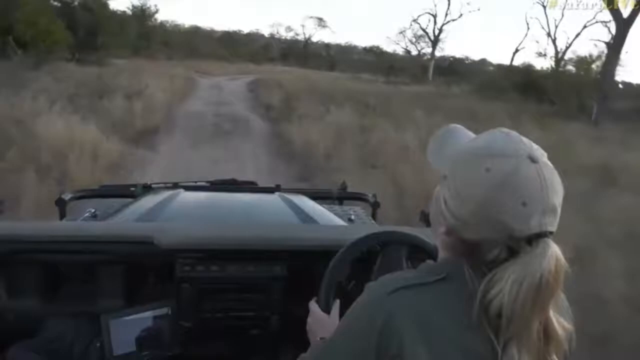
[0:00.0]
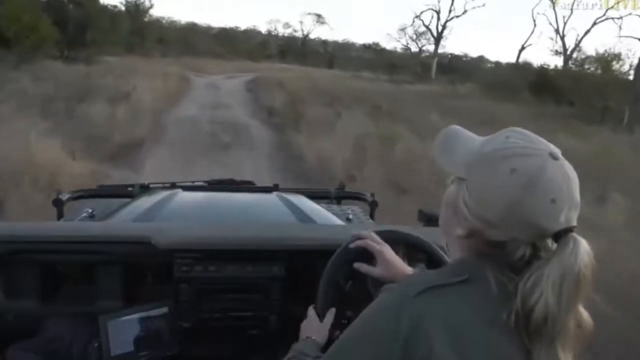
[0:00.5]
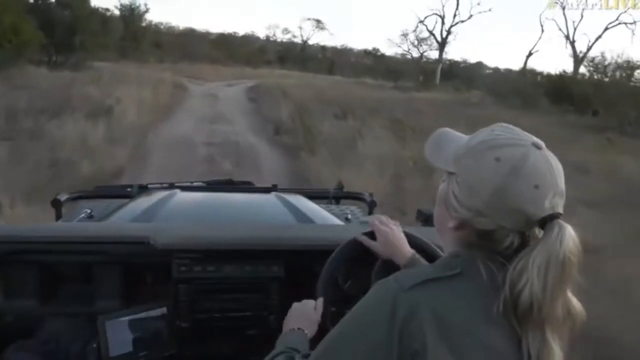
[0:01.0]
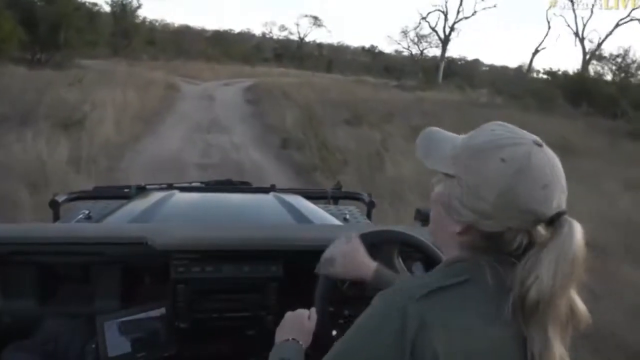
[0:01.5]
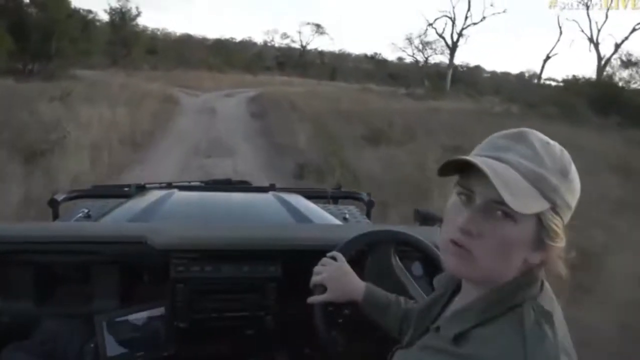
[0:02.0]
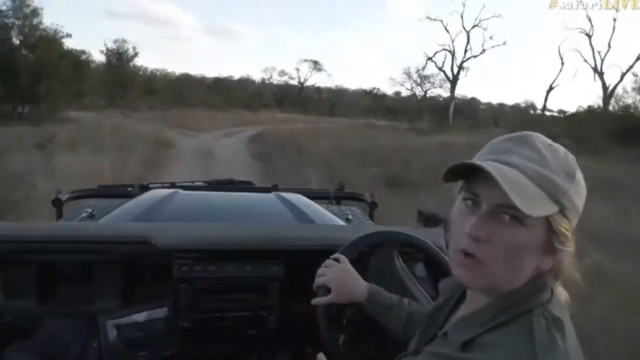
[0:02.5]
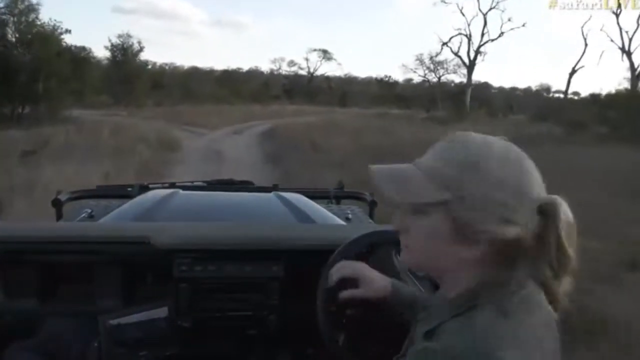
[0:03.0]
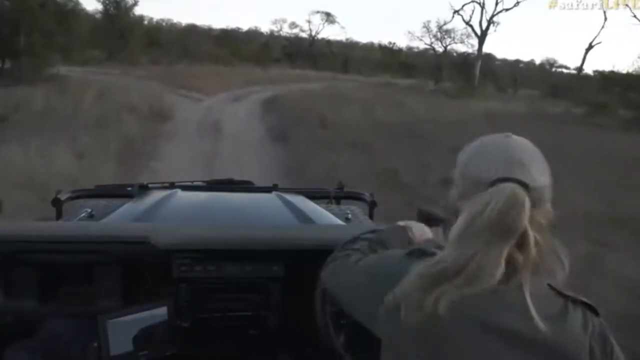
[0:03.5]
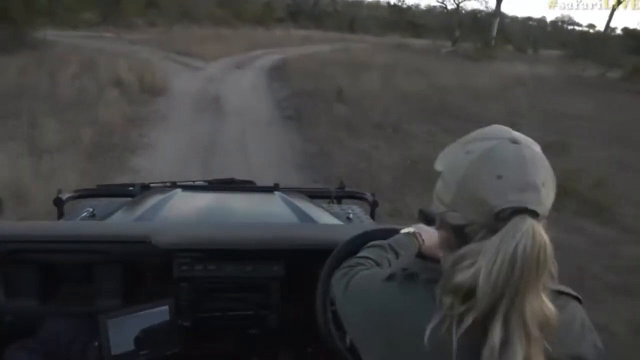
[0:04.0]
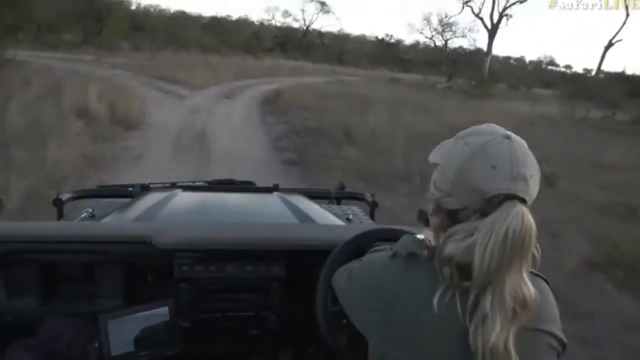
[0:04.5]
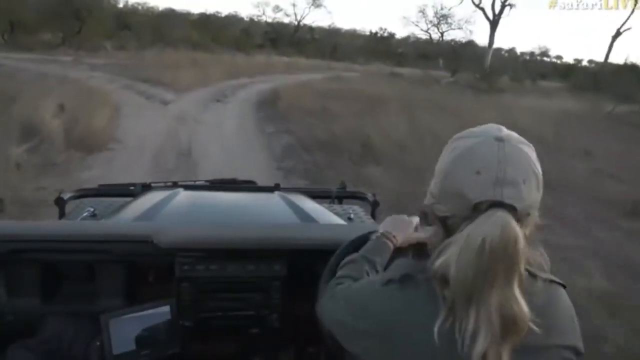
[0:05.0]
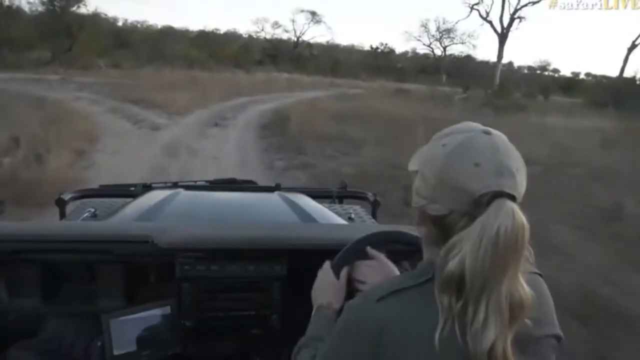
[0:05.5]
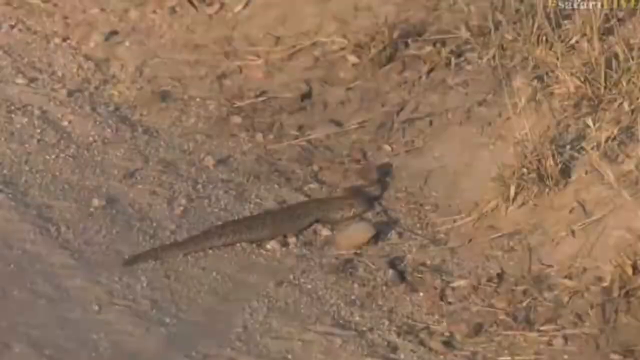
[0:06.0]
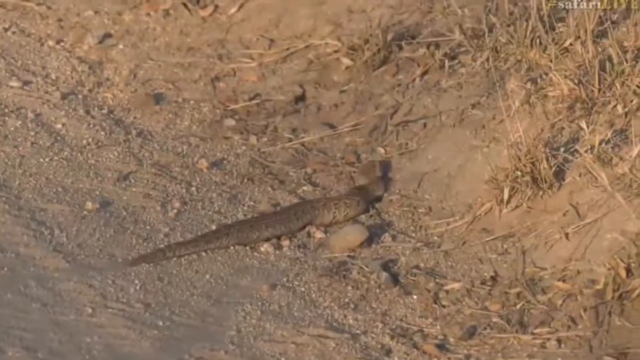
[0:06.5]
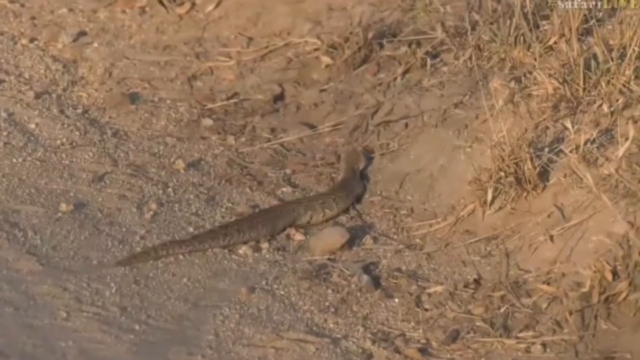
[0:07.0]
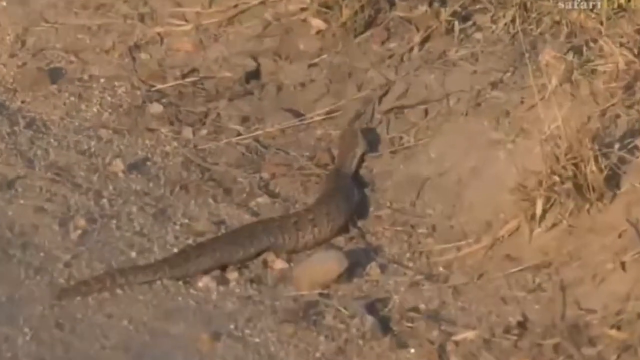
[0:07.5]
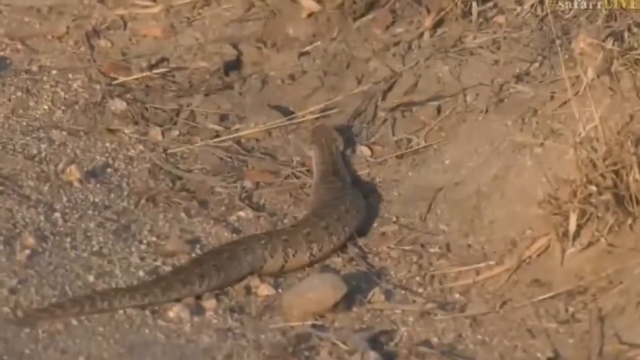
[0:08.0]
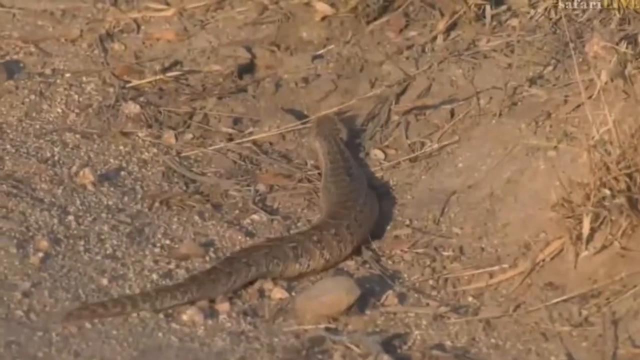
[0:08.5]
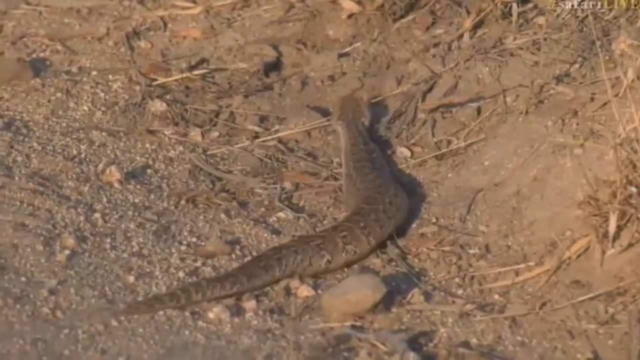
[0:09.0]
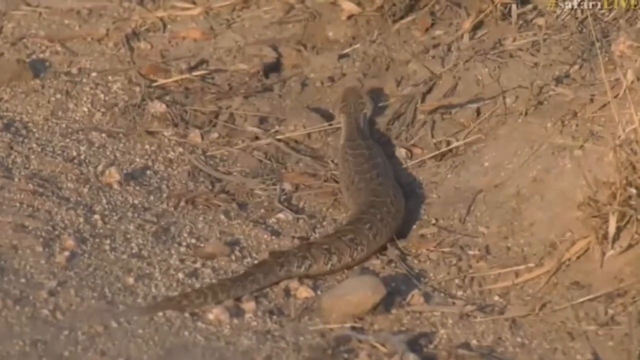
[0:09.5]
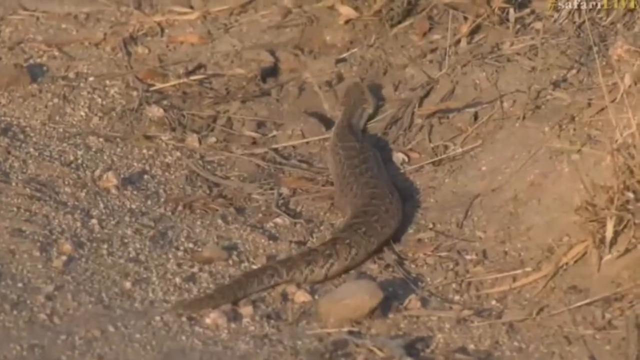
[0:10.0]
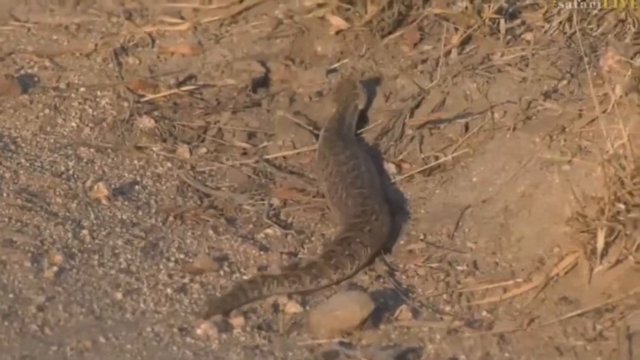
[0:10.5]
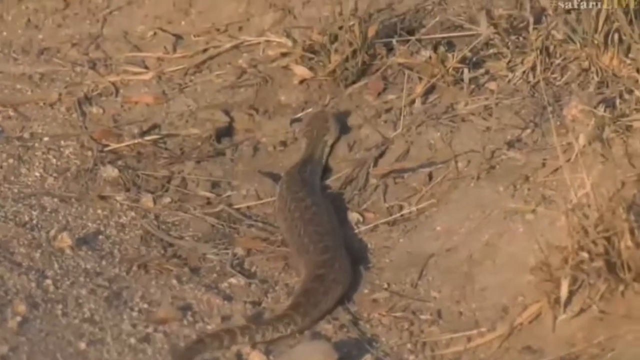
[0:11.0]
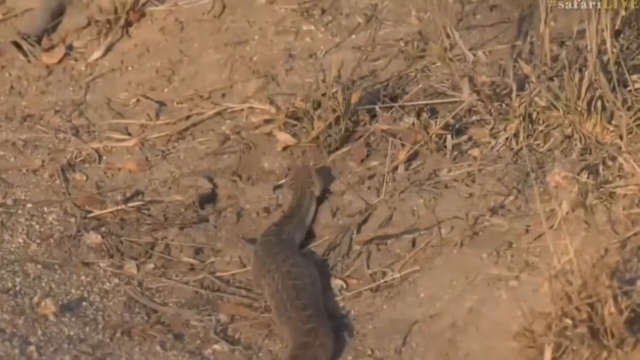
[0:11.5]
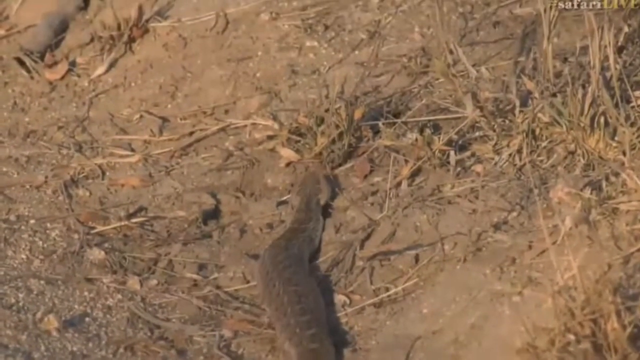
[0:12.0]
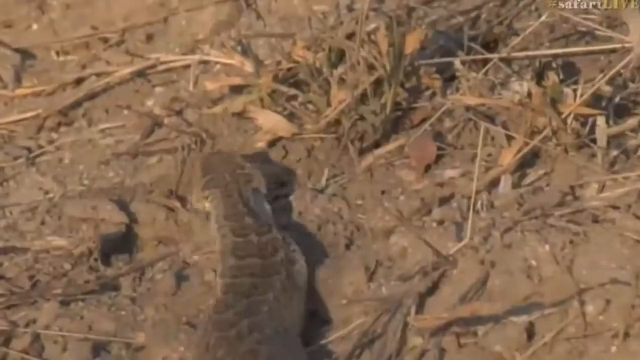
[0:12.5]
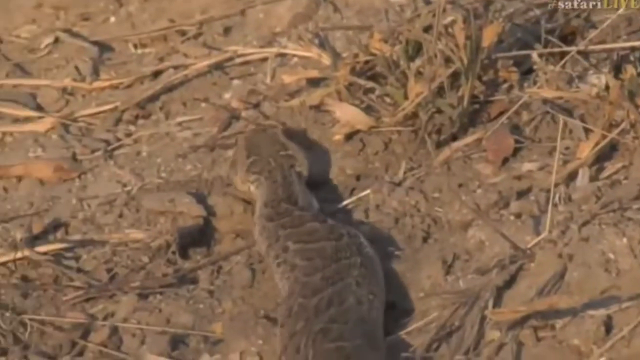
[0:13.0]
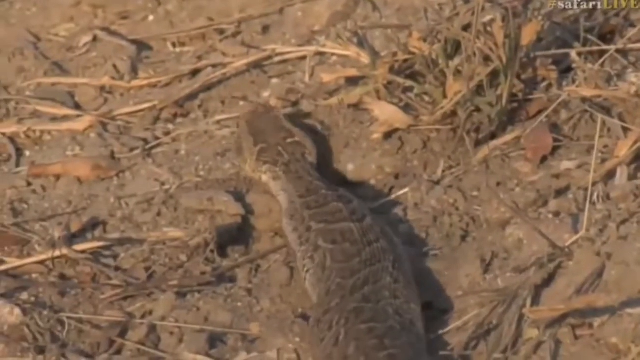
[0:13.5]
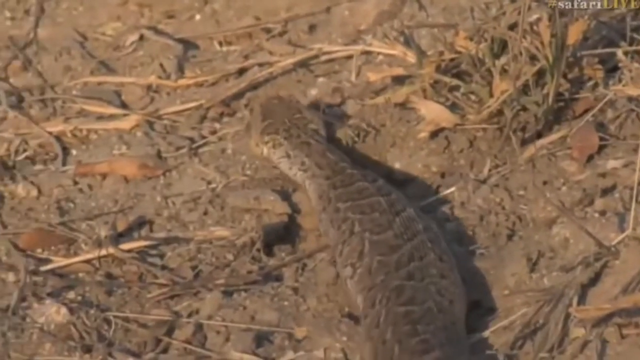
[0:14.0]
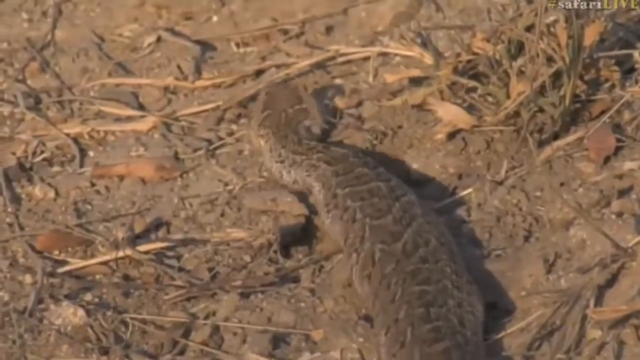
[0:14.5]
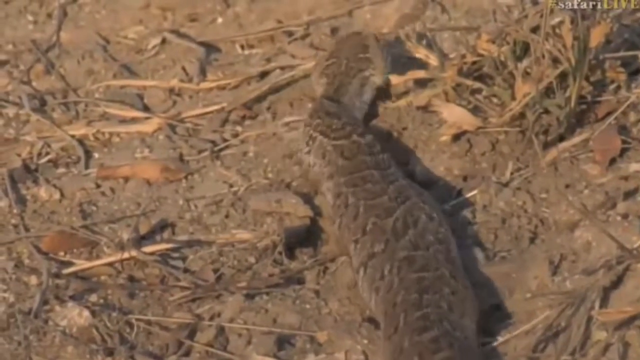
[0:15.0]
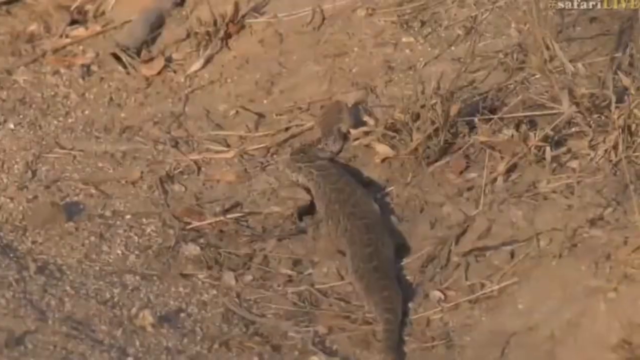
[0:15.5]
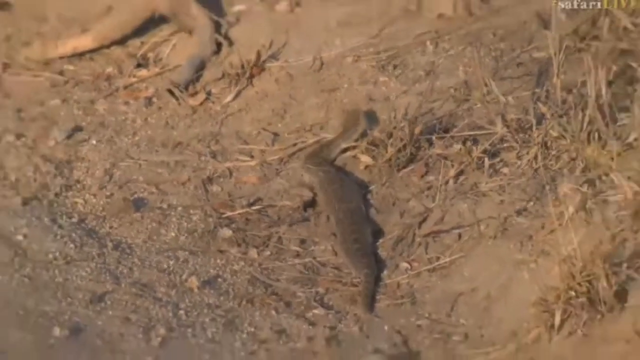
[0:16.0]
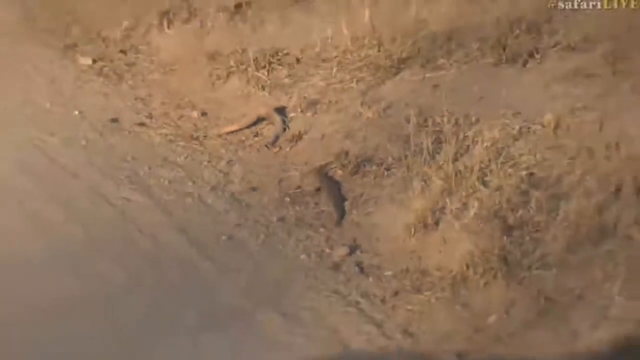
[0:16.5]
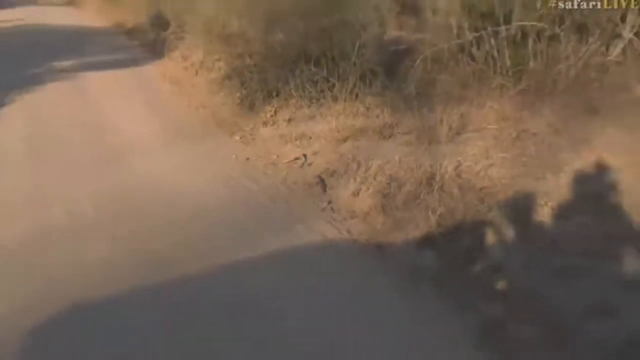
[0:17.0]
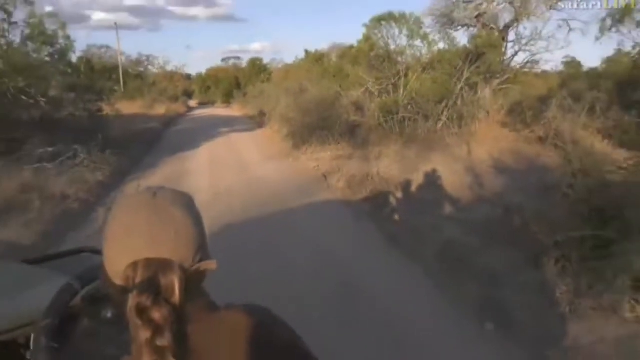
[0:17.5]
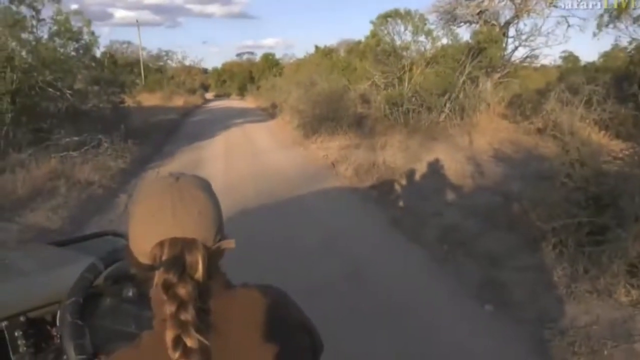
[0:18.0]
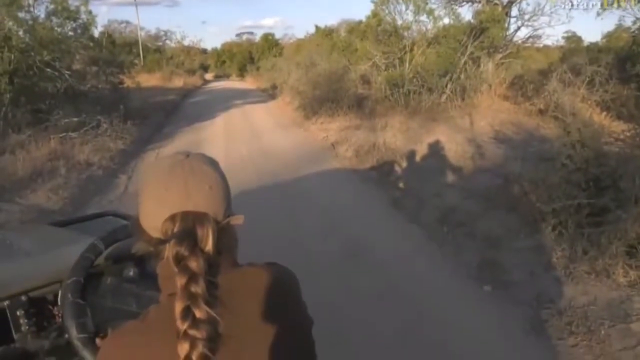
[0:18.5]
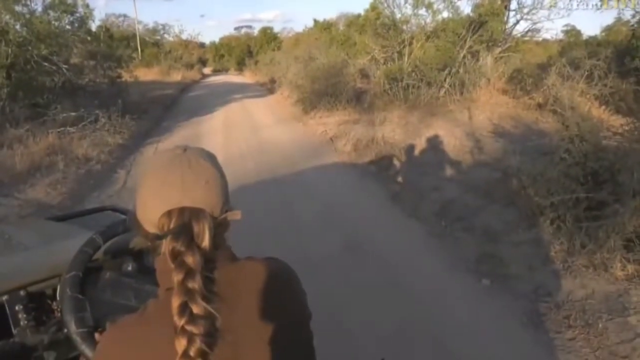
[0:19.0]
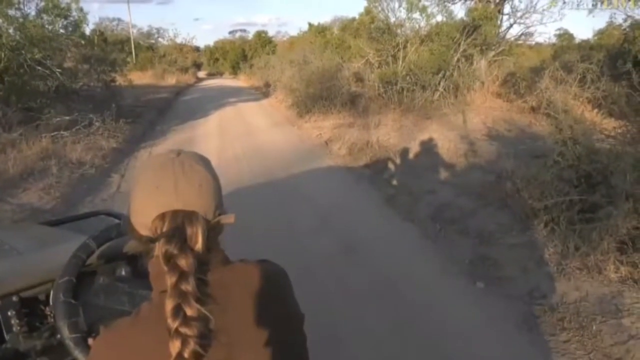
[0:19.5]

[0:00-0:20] A woman drives an open-top Jeep down a dirt track. She is a white woman with a blonde ponytail, wearing a khaki-coloured baseball cap and a khaki-coloured top. The camera is behind her, as if the person in the back seat is filming her. She turns around, looks over her shoulder and talks to the camera, then looks back to the track she is driving along. There is grass on either side of the track and some quite sparse trees; the place looks like it may be Africa or a similarly warm continent. The shot cuts to a snake slithering along the ground, first in a close-up of the brown-coloured snake and then in a wide shot. As the wide shot pulls out, it becomes clear that the woman is watching the snake from her Jeep.